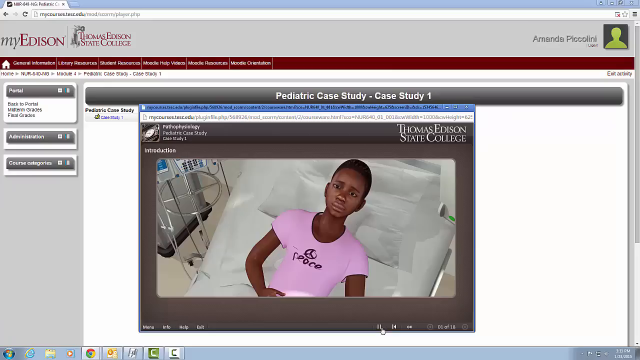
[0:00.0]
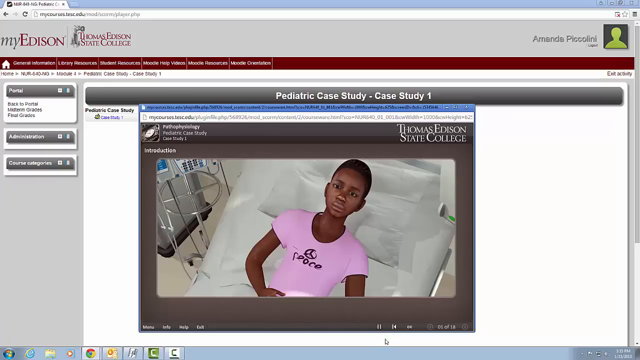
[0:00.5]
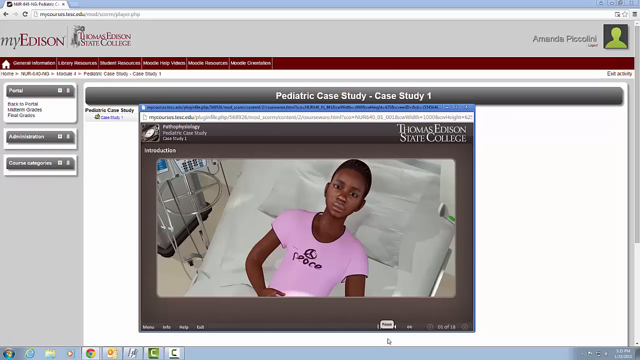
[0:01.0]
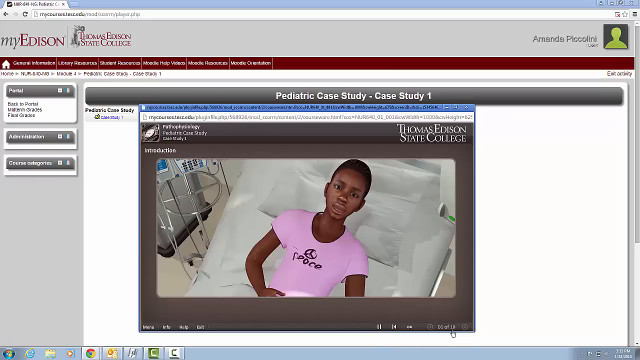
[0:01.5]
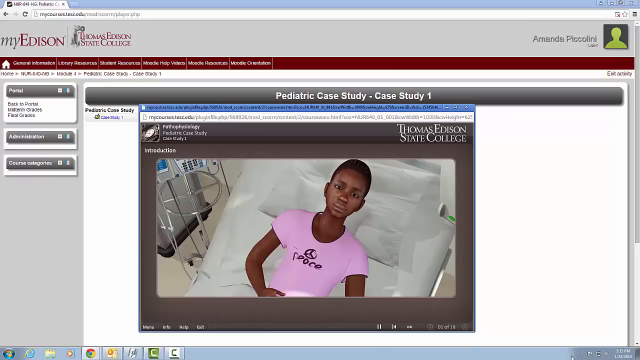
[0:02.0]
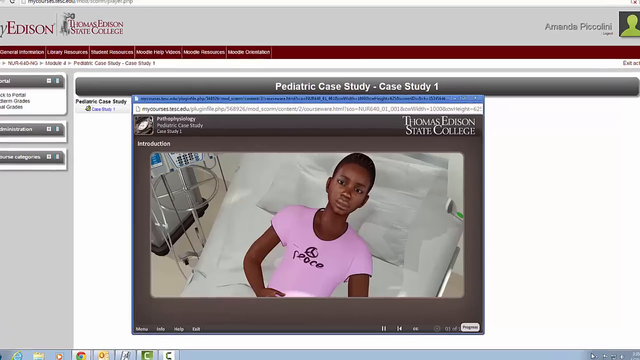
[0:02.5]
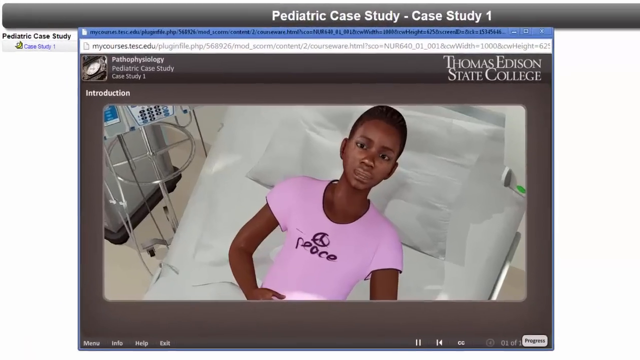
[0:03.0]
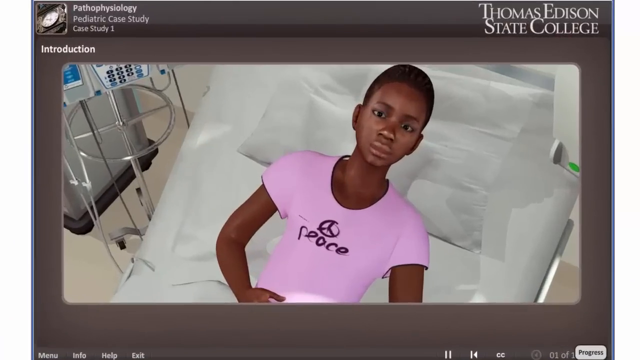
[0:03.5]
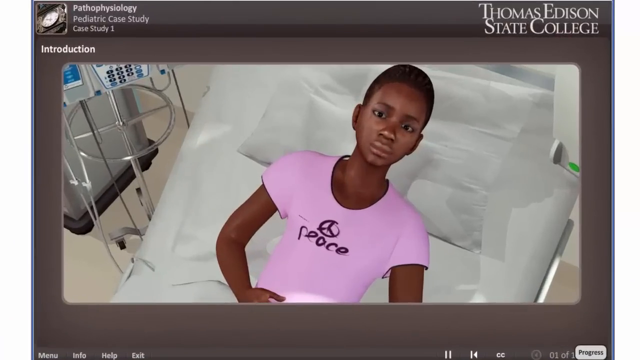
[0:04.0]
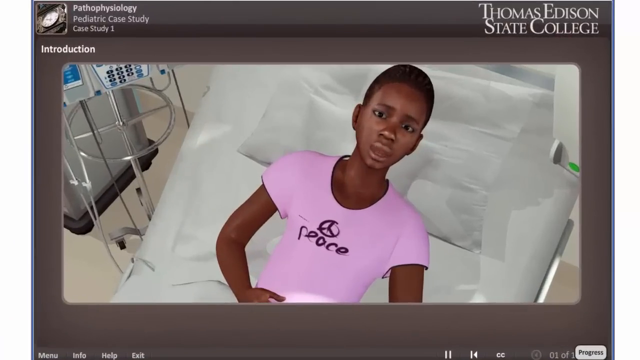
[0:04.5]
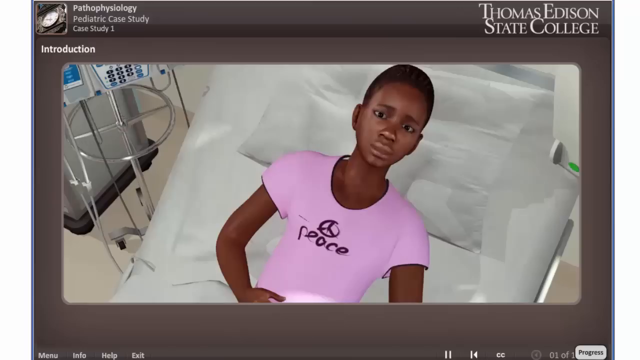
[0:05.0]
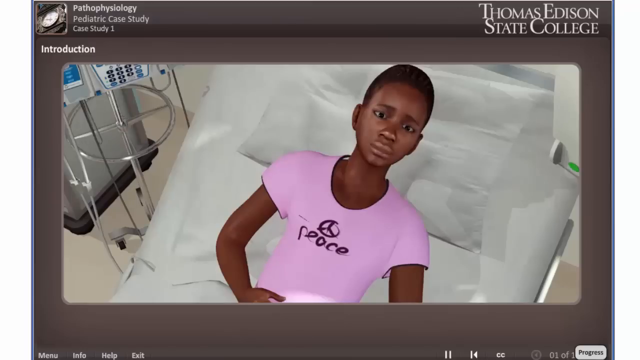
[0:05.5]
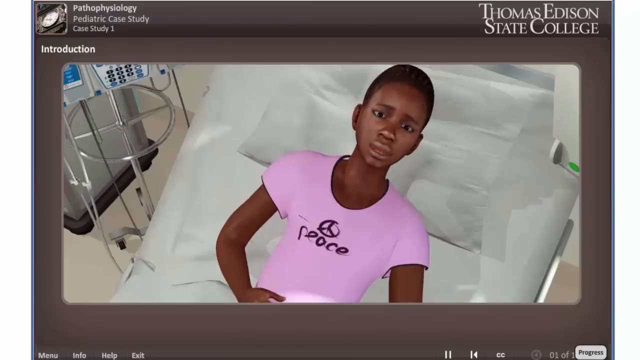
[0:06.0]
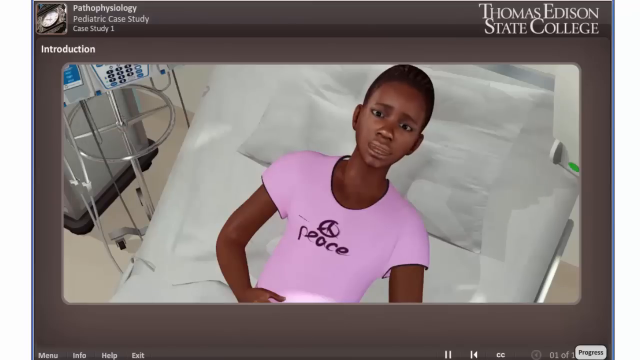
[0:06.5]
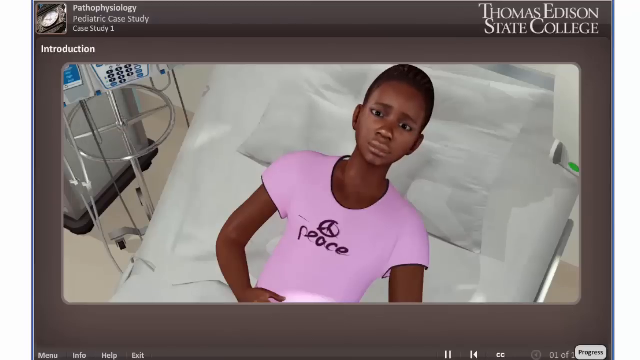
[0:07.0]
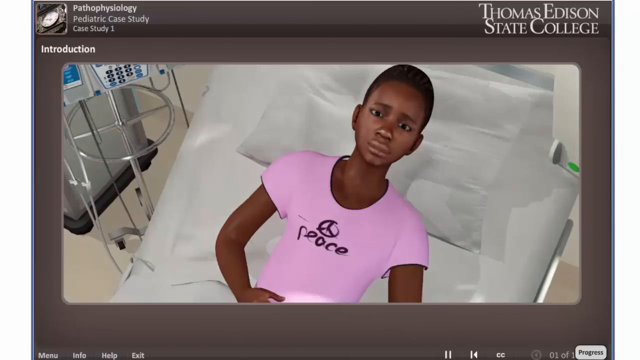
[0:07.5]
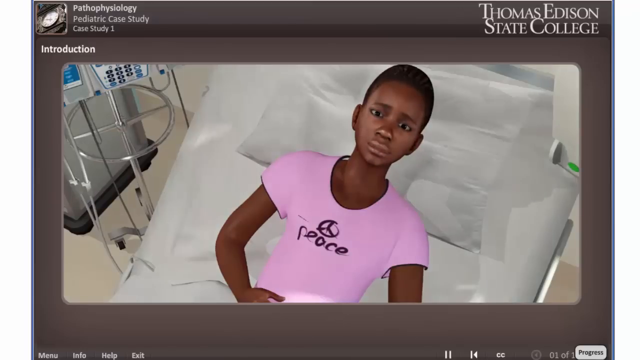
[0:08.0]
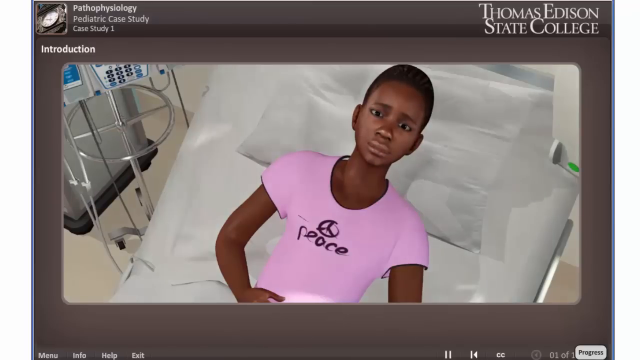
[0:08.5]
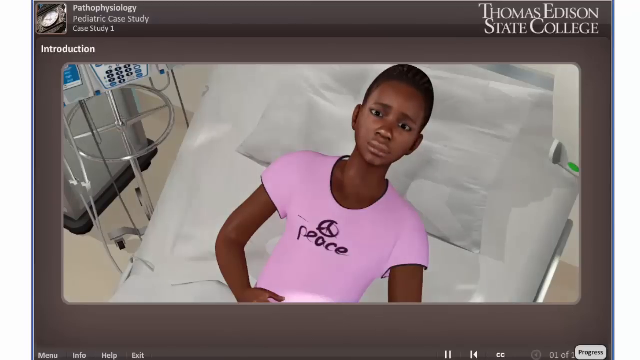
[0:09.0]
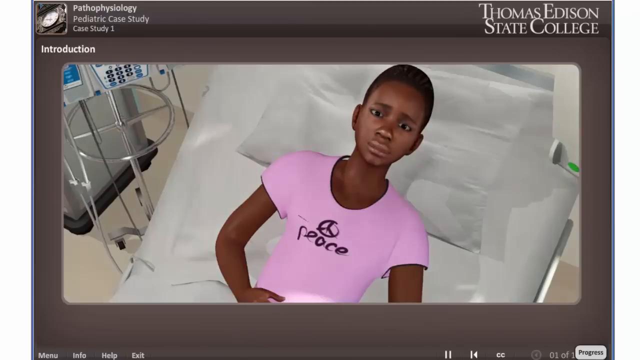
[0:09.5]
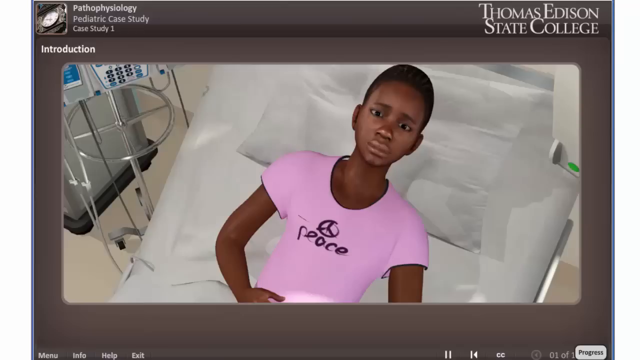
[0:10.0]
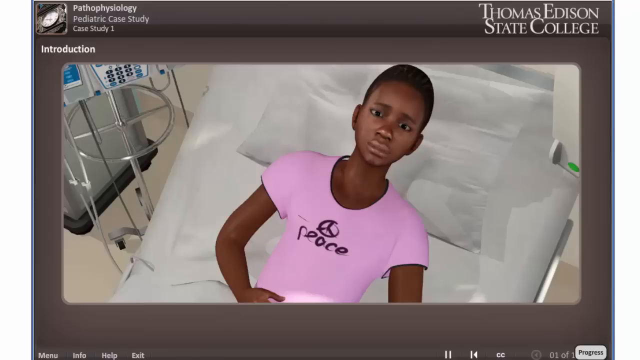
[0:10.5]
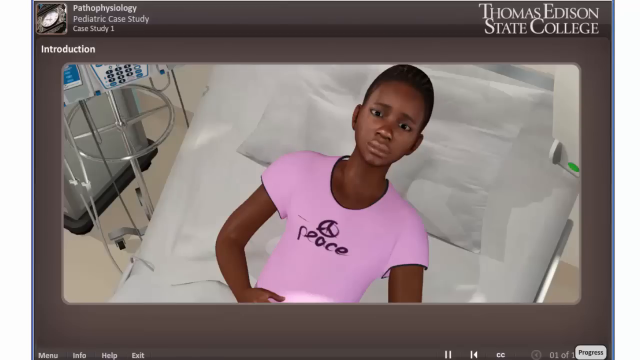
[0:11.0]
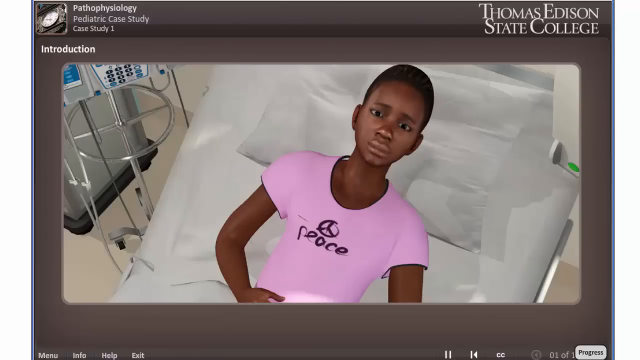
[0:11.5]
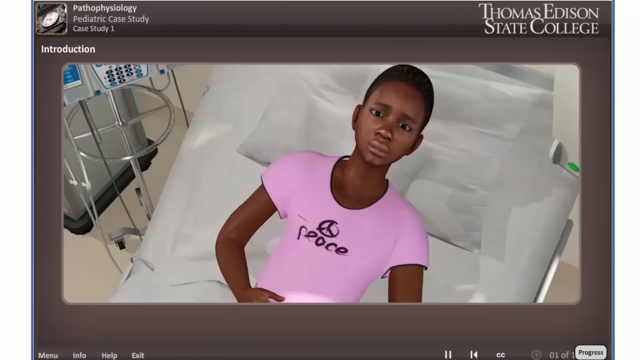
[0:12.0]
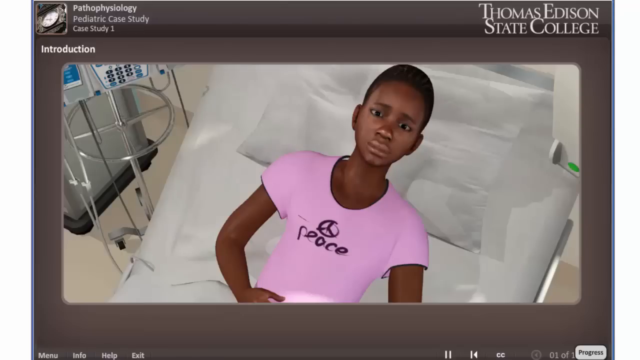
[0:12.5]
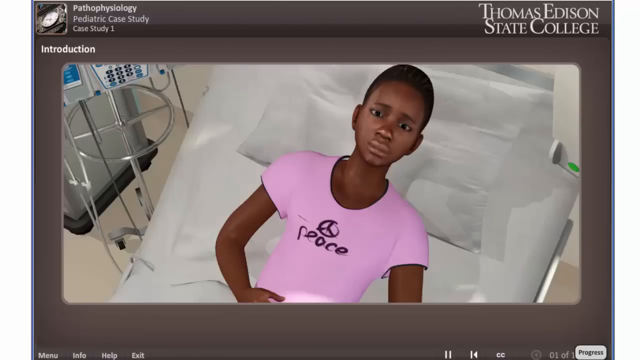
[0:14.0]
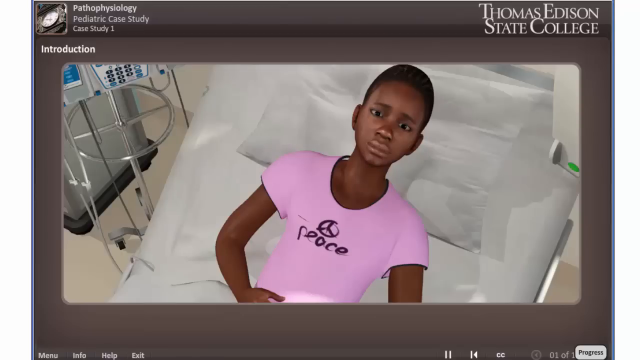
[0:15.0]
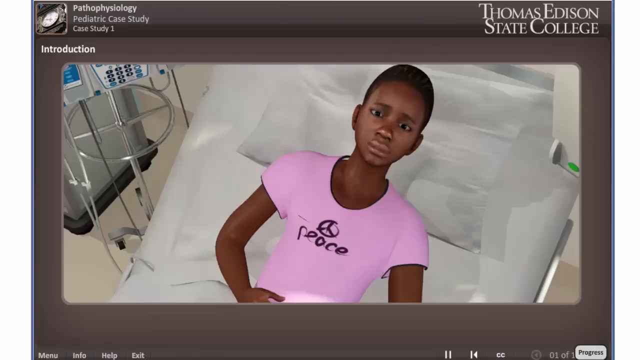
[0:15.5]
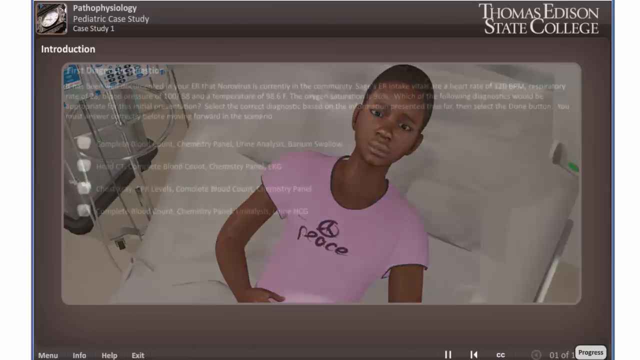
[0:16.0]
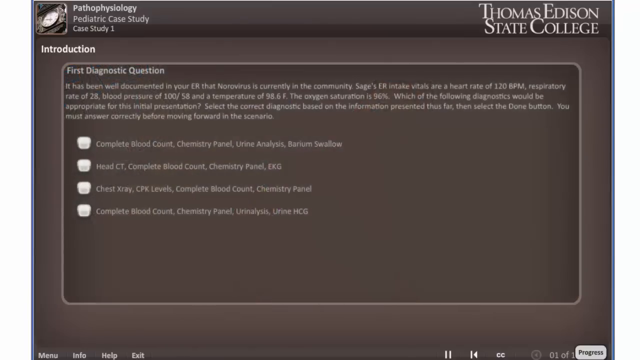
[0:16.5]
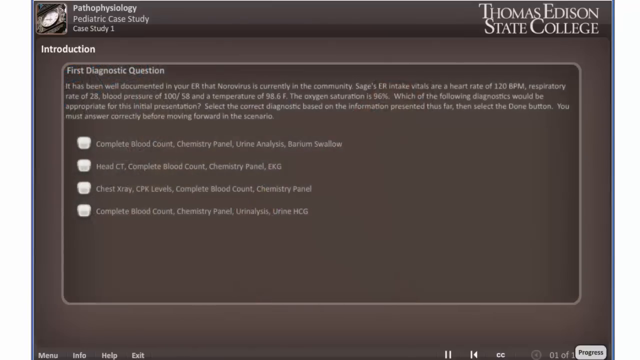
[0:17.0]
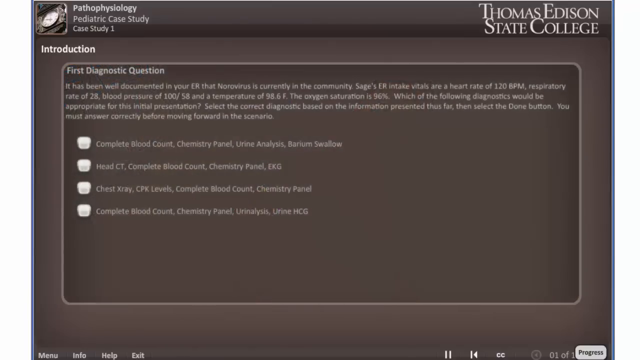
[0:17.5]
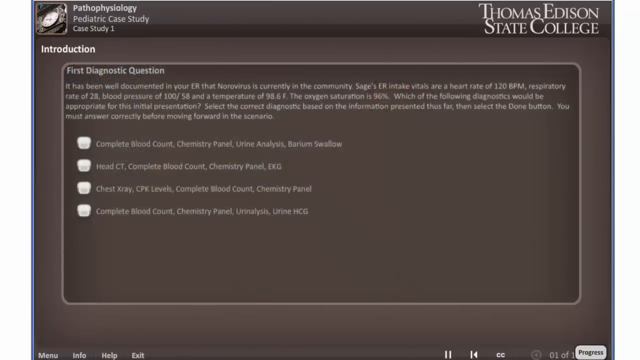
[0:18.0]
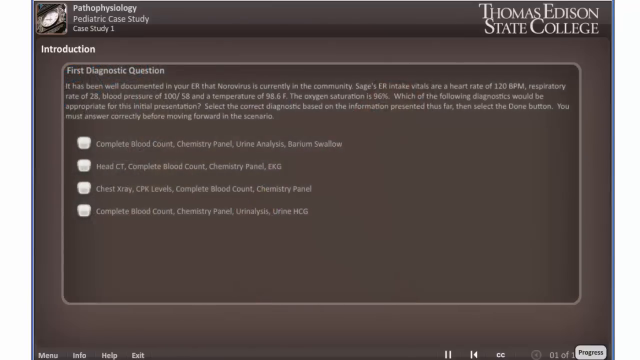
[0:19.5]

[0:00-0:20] A website is on screen, with "Thomas Edison State College" in the upper left-hand corner and "Thomas Edison State College" also appearing in burgundy. Text reads "pediatric case study - case study one", apparently for a medical course. A child in a short-sleeved purple shirt is lying down in a hospital bed; her shirt looks like it says "peace" with a peace sign above the word. Her mouth moves and then stops. Words then pop up reading "introduction first diagnostic question". The text is small, but it appears to read "it has been well documented in your ER that norovirus is currently in the community. ER intake vitals are a heart rate of 120 pbm, respiratory rate of 28, blood pressure of 100 over 58, and a temperature of 95.6." An oxygen saturation value follows that is either 56, 96 or 90 percent. The text continues: "Which of the following diagnostics will be appropriate for this initial presentation? Select the correct diagnostic based on information presented thus far then select the done button. You must answer correctly before moving forward in the scenario."